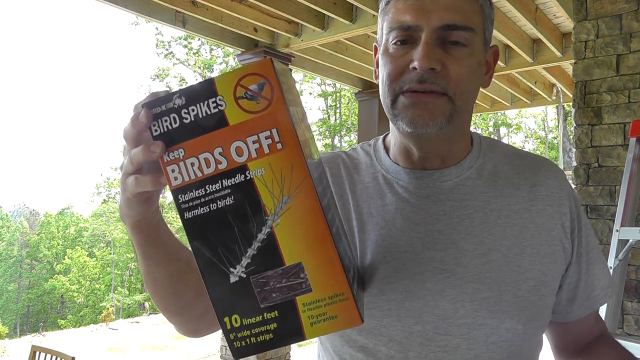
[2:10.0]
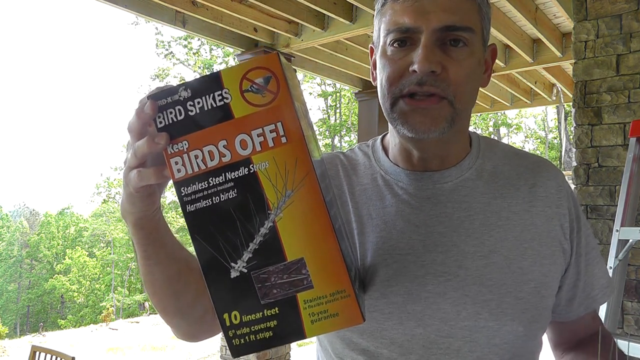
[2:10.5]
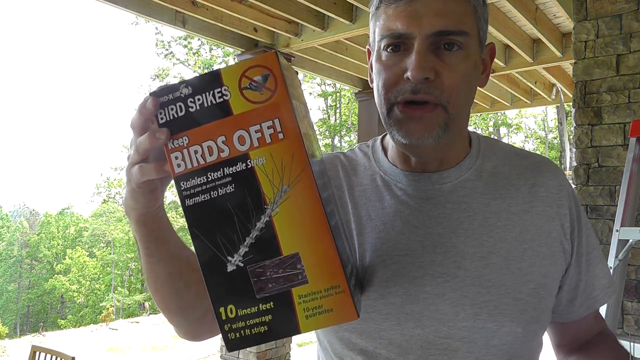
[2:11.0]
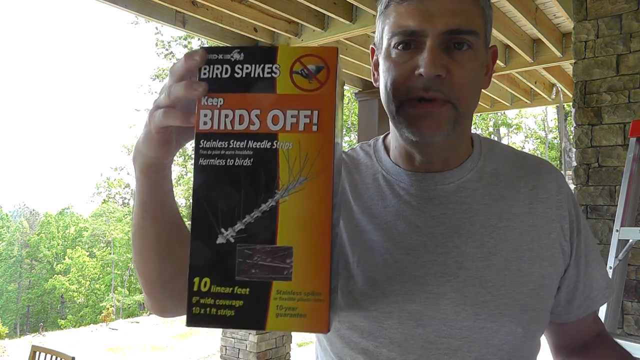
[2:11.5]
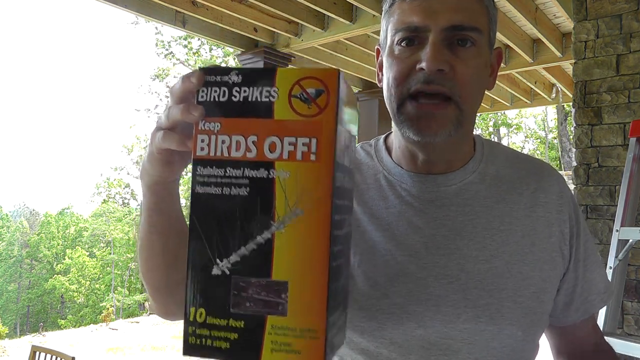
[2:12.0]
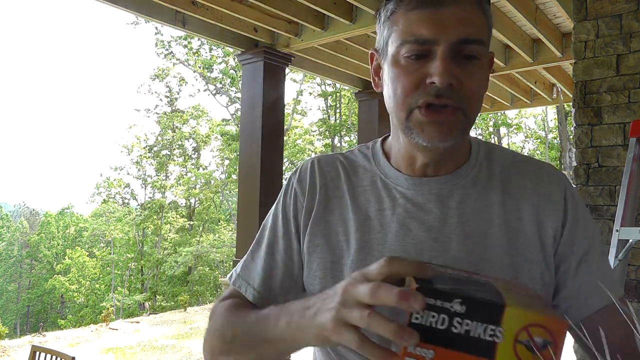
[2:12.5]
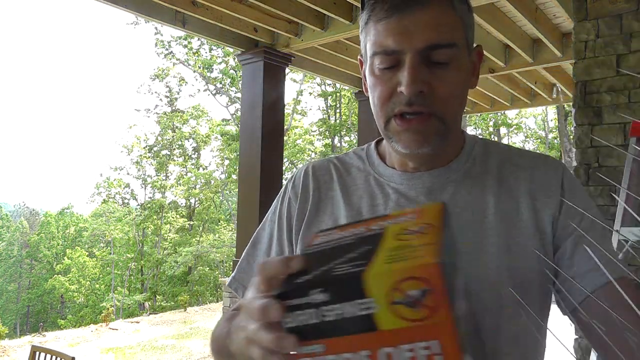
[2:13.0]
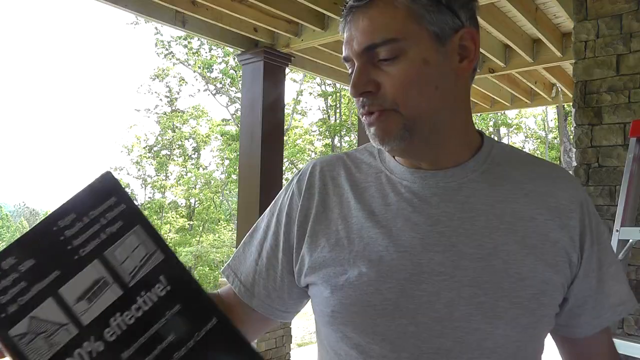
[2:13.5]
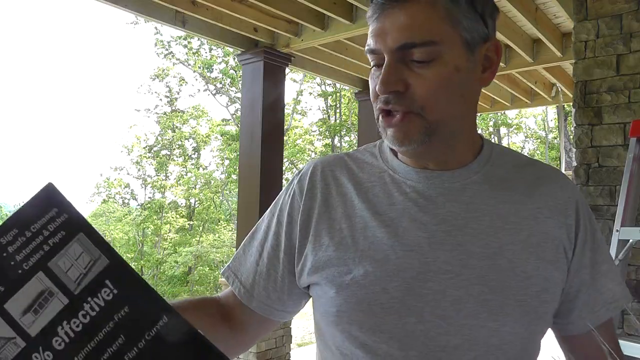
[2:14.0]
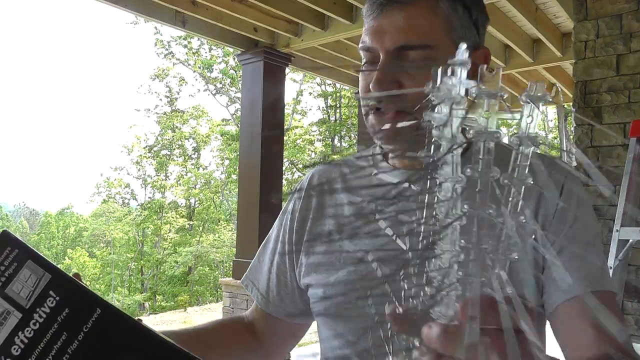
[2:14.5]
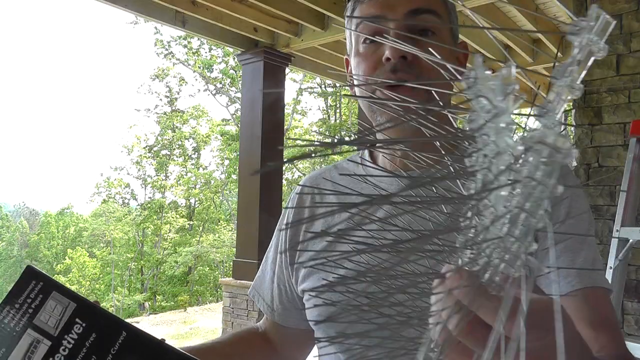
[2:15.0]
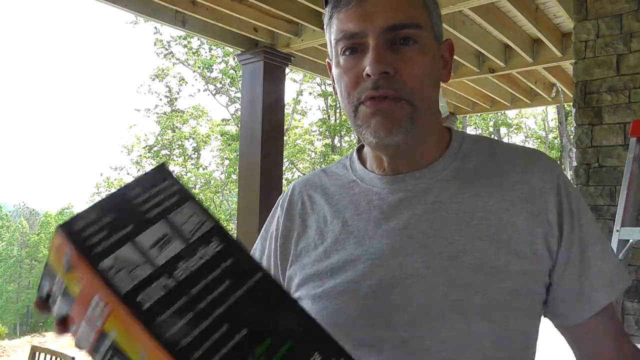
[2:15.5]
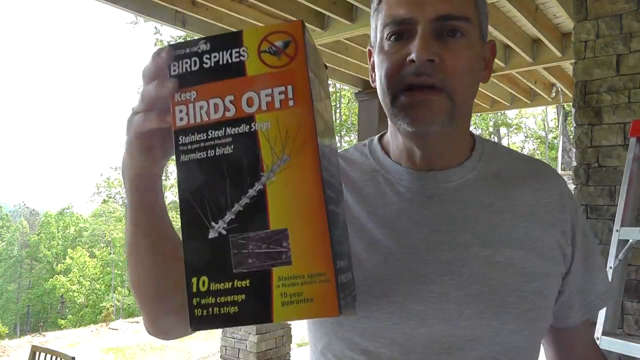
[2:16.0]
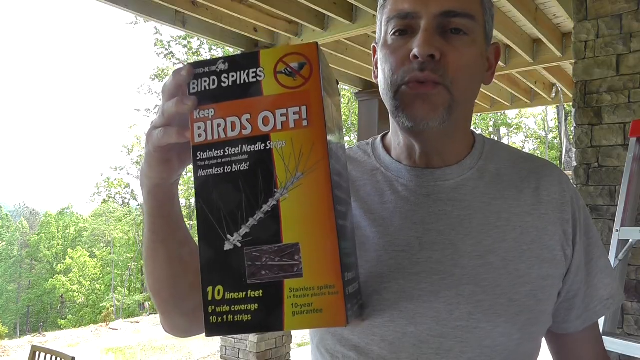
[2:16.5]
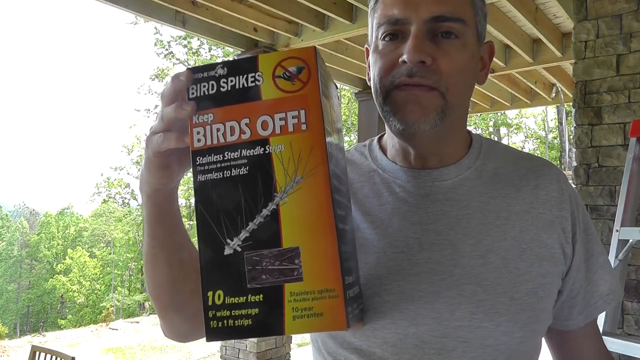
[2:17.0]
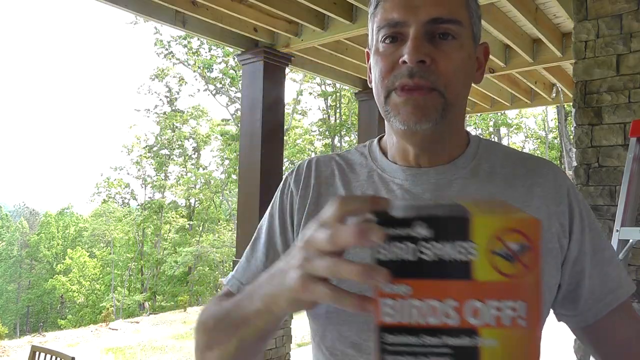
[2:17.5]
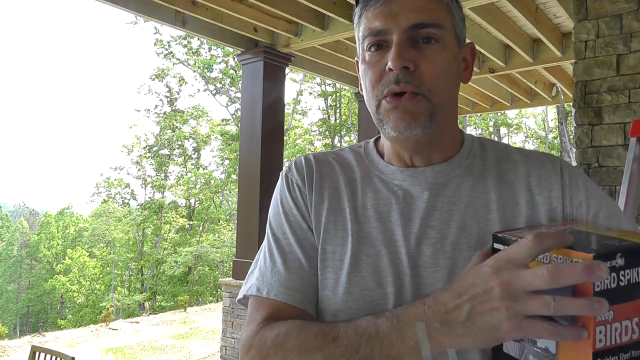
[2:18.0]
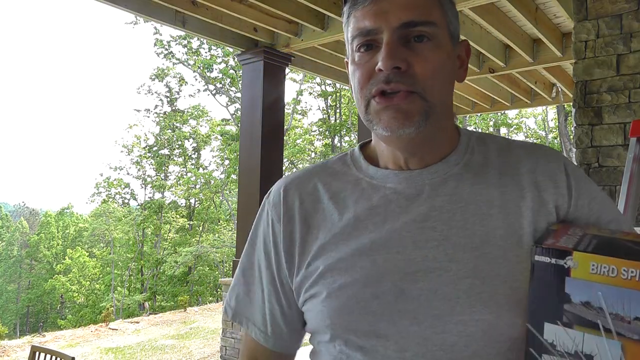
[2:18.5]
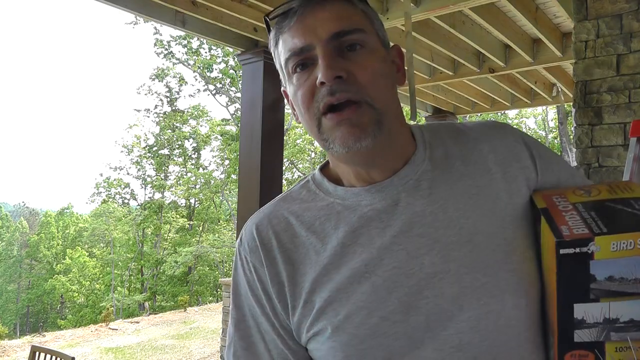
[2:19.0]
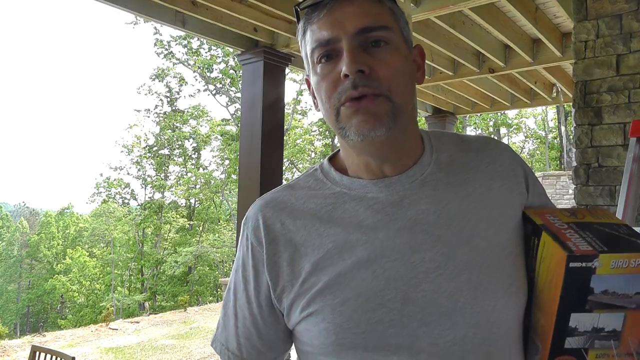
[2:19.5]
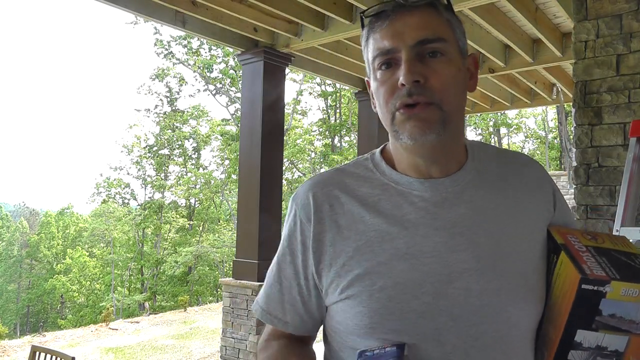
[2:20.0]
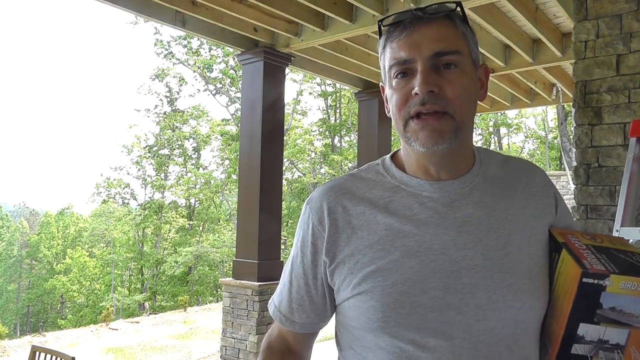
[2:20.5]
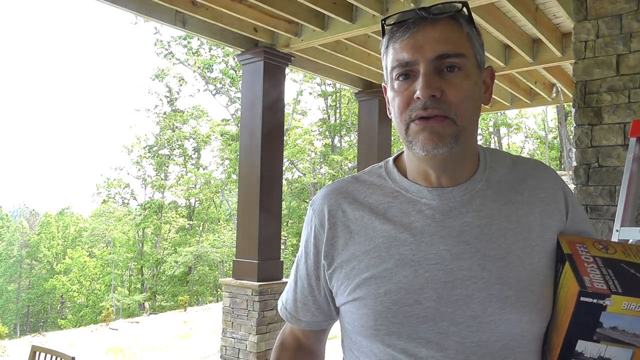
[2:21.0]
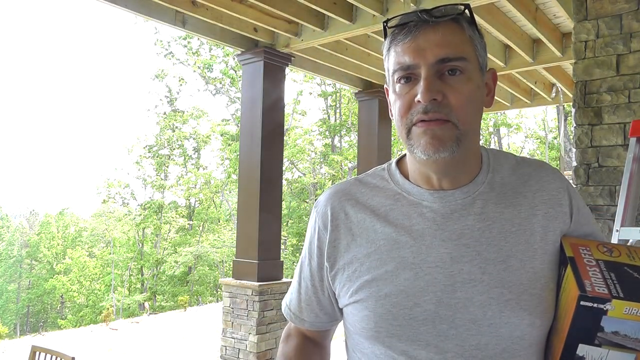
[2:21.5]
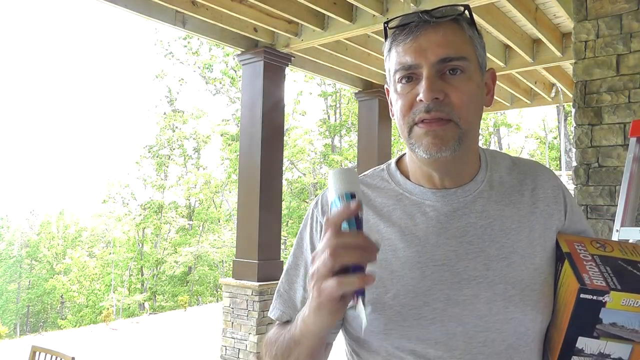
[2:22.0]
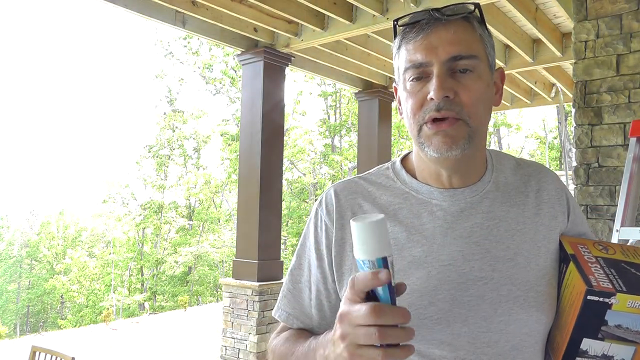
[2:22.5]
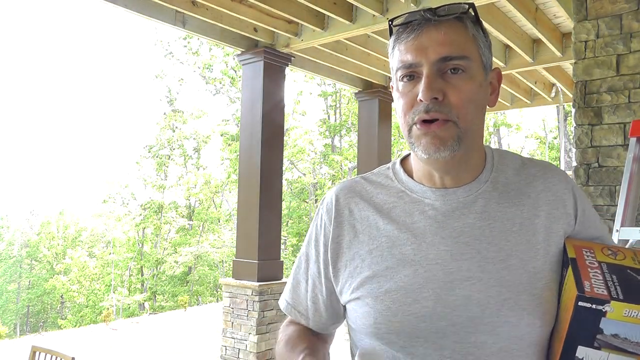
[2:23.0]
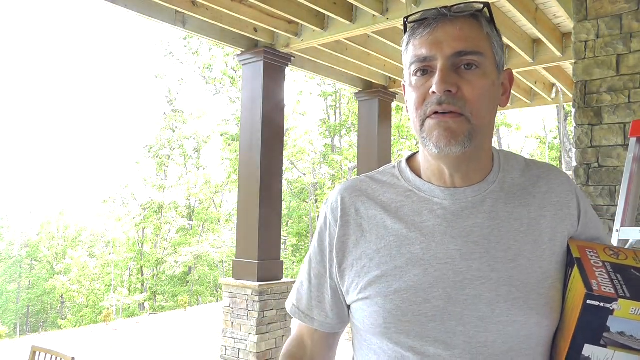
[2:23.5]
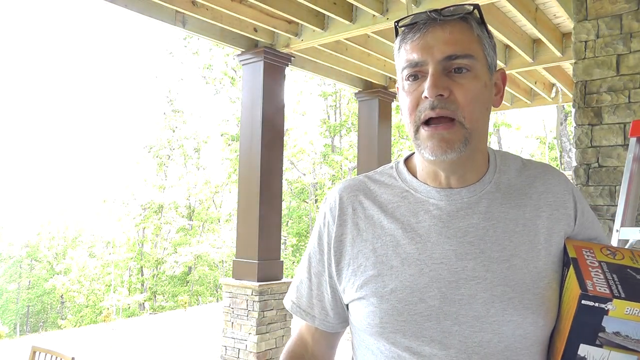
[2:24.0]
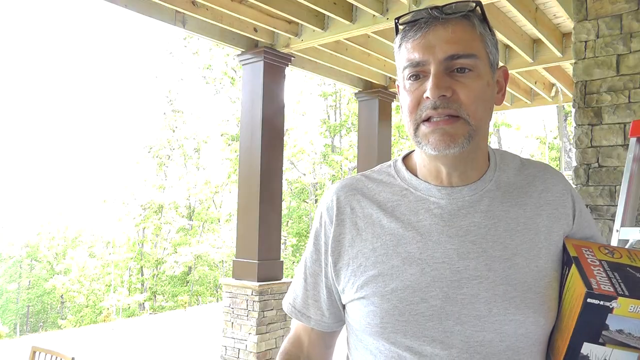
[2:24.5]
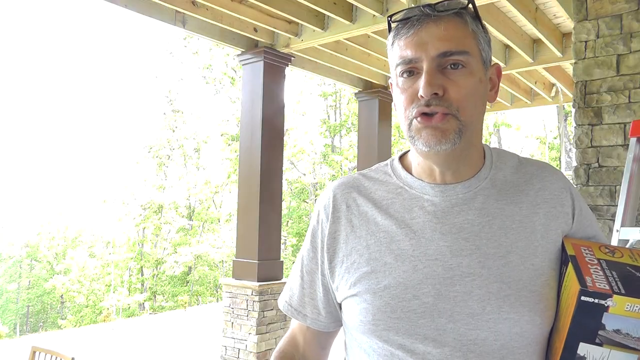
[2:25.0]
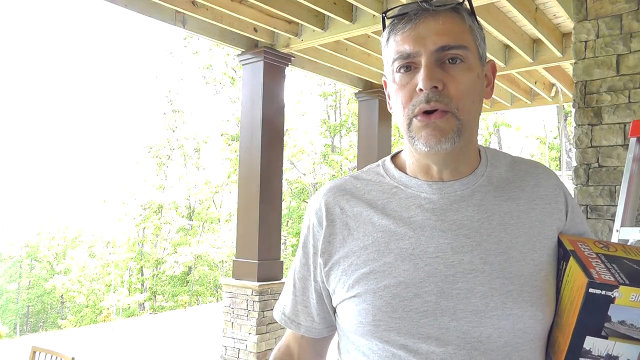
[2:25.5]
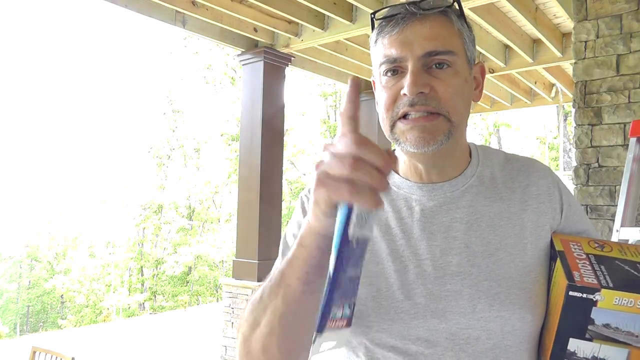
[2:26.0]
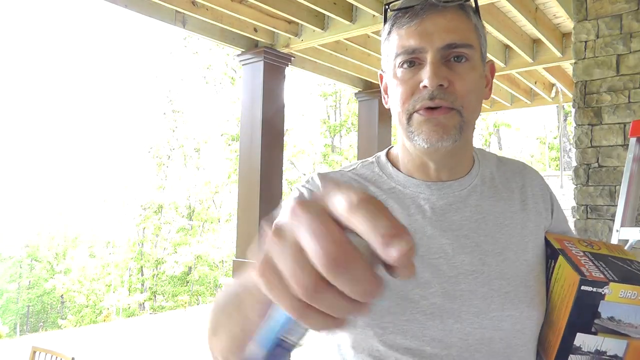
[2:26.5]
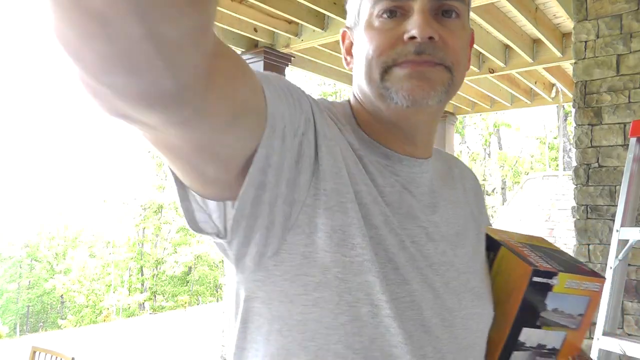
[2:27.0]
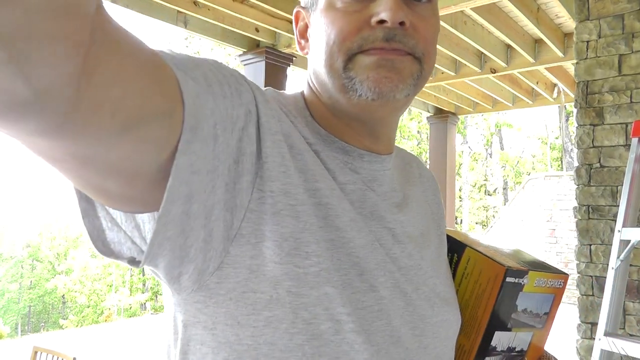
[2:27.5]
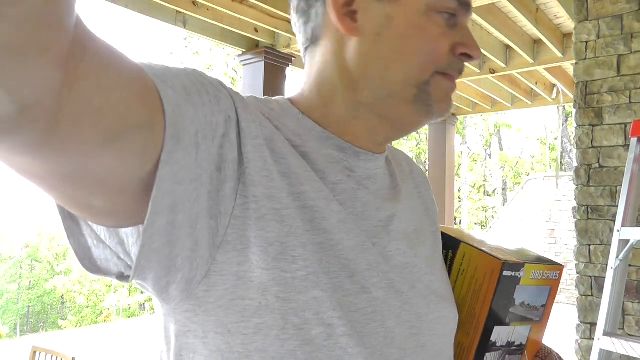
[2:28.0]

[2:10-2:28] The man, in his late 40s, holds up the Birds Off box in his right hand, then switches over to grab a tube of adhesive and points at the camera, making some sort of direct statement. He swaps hands between the product box and the product itself, flexible plastic strips with metal spikes sticking out of them. He stands on the front porch of a newly constructed home, with an aluminum ladder in the background standing next to a light tan and gray stone wall. It appears to be early spring outside, and trees are visible in the background.